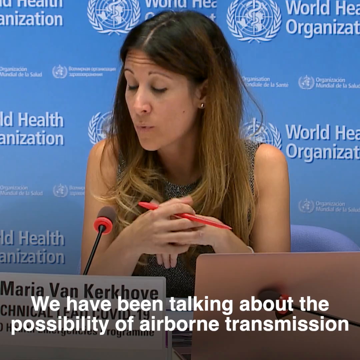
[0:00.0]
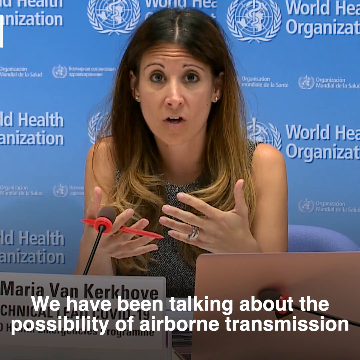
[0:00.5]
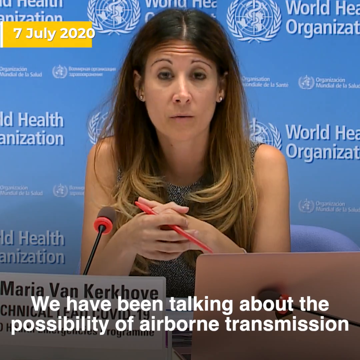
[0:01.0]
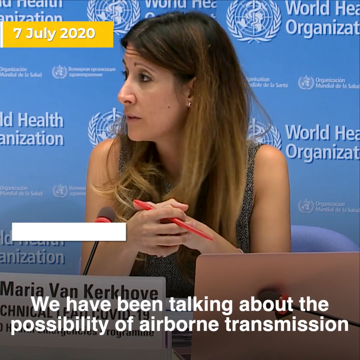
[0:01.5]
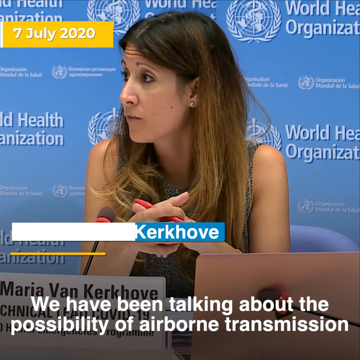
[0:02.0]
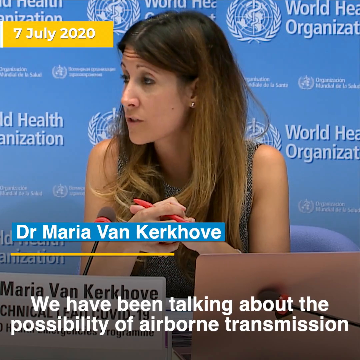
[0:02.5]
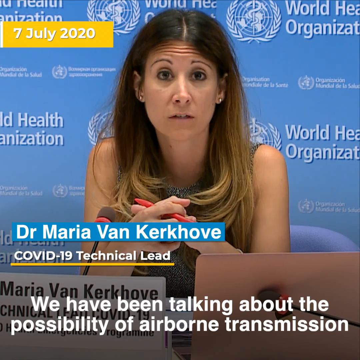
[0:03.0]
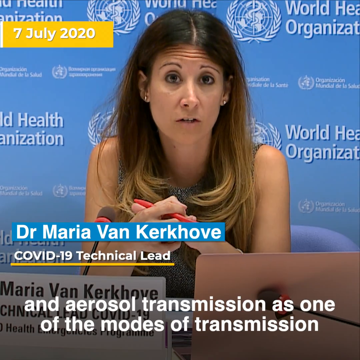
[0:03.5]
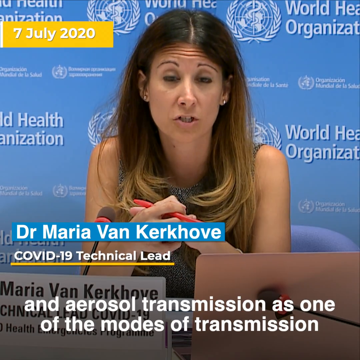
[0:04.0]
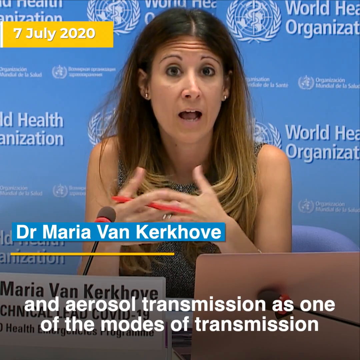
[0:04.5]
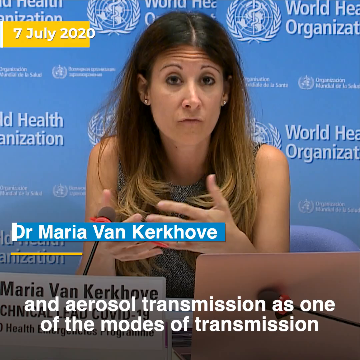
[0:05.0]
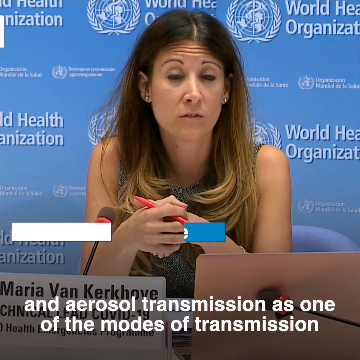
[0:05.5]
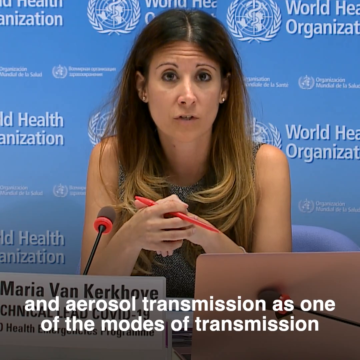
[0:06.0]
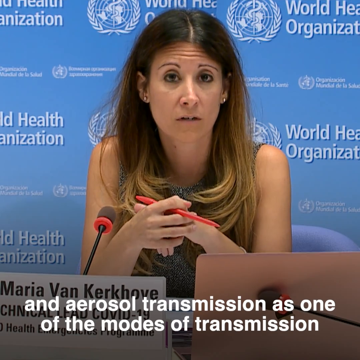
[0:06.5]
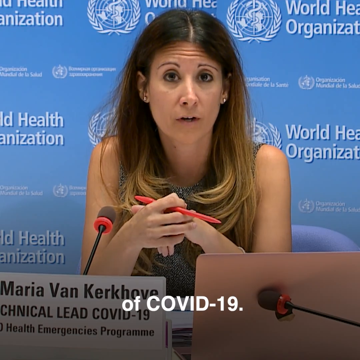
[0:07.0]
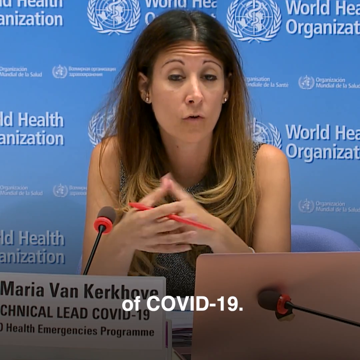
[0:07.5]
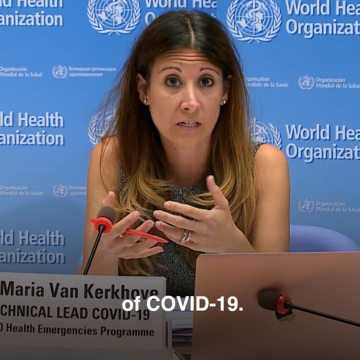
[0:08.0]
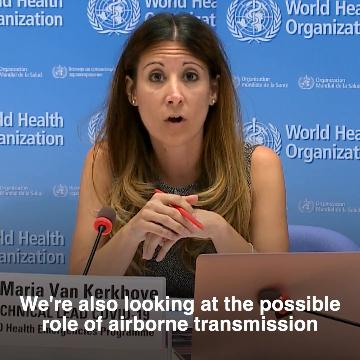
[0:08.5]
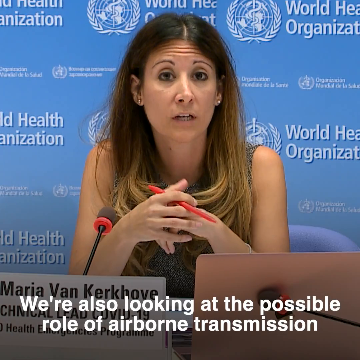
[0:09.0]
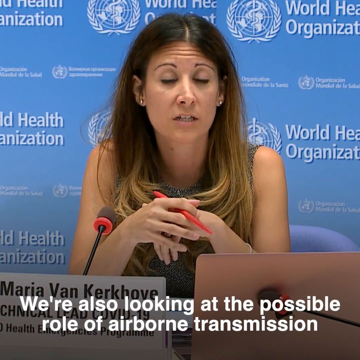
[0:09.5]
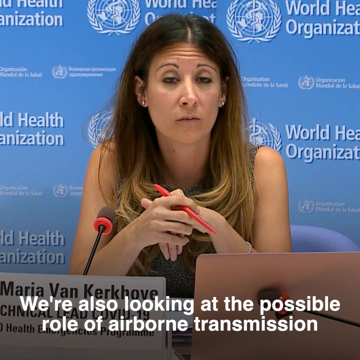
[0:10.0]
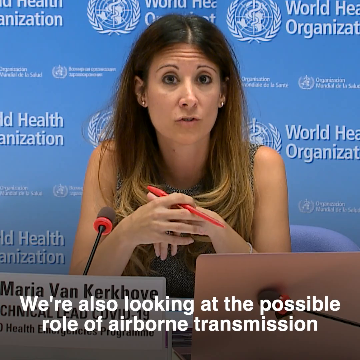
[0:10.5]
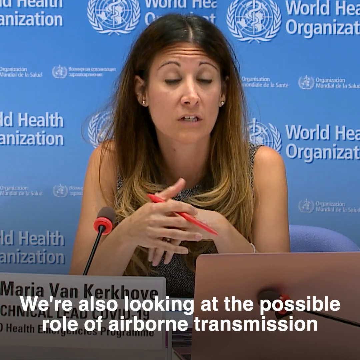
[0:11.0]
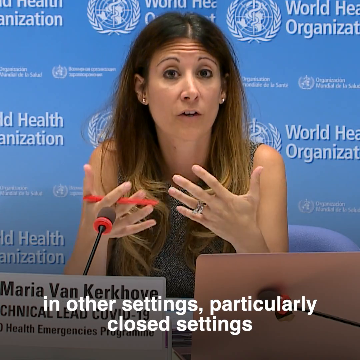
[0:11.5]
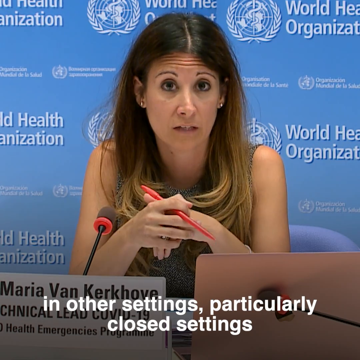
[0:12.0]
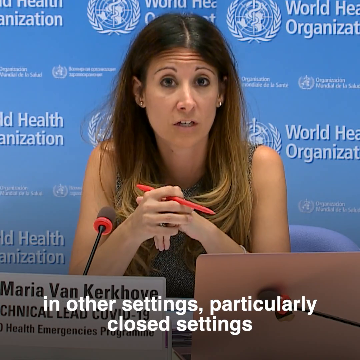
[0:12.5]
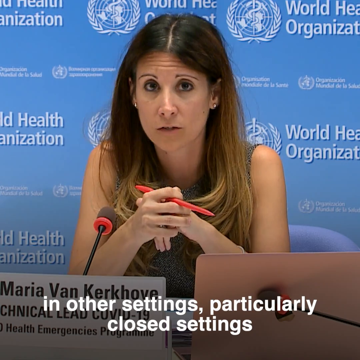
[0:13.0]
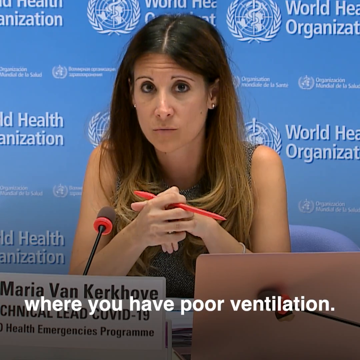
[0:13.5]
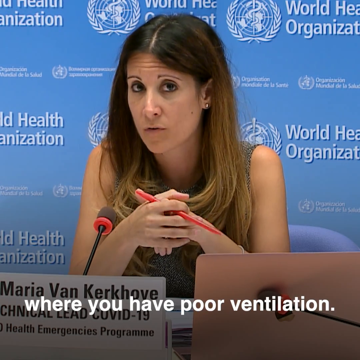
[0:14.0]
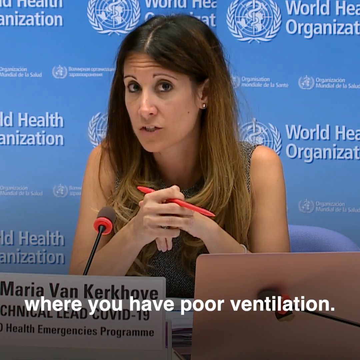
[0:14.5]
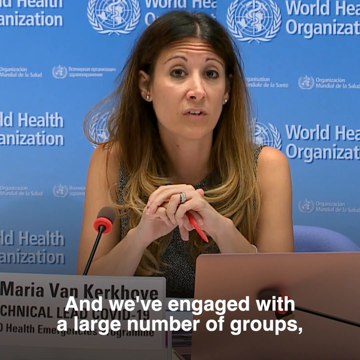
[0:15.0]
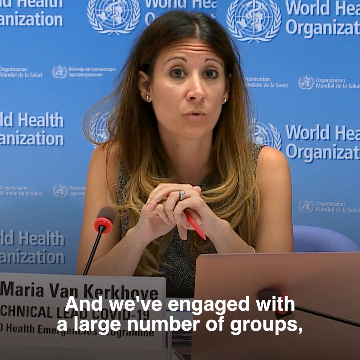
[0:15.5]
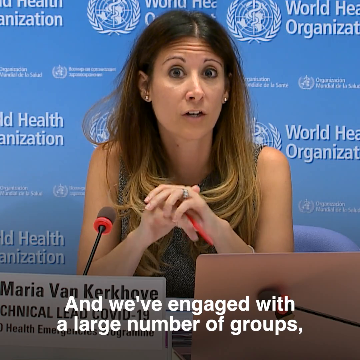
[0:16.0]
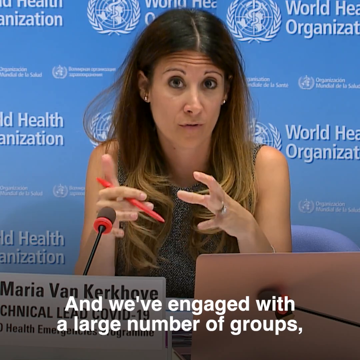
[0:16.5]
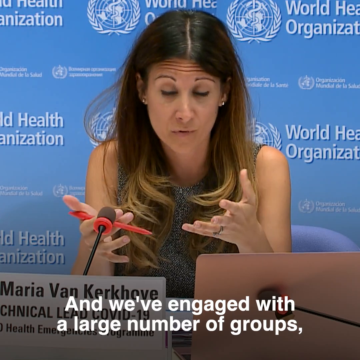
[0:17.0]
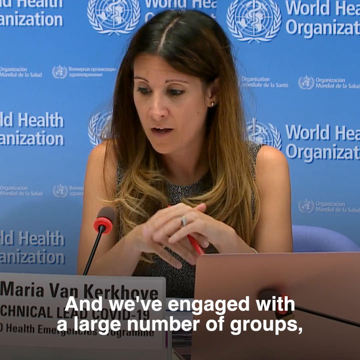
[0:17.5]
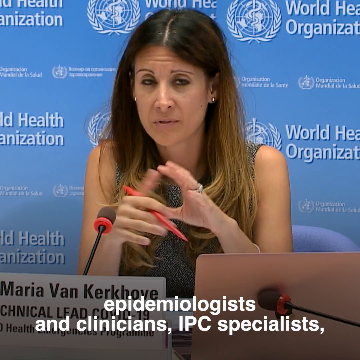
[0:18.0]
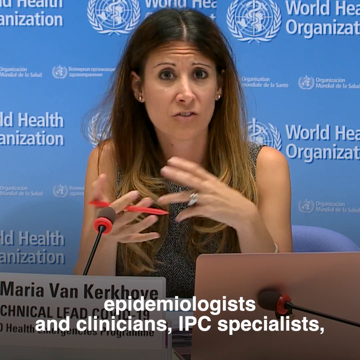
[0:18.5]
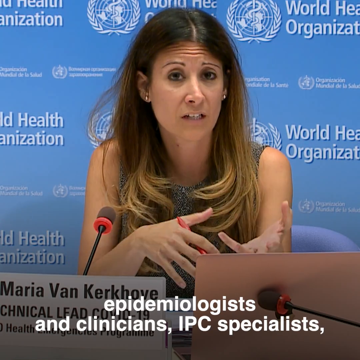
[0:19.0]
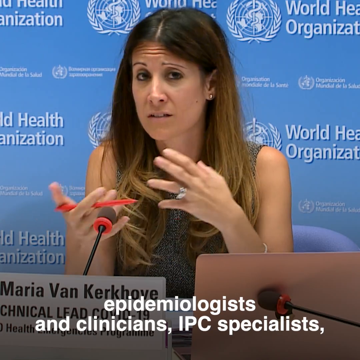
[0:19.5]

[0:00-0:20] A woman, who appears to be speaking, is sitting down with an open tablet or laptop in front of her. Behind her is a blue backdrop with white lettering that says "World Health Organization." White text on the screen reads "we have been talking about the possibility of airborne transmission." The video is time stamped July 7th, 2020, and the speaker is identified as Dr. Maria von Kirchhoff, apparently a COVID-19 technical lead. As she speaks, her hands are clasped at various intervals and she makes gestures. She holds a red pen in her right hand, and various text scrolls along the bottom of the screen.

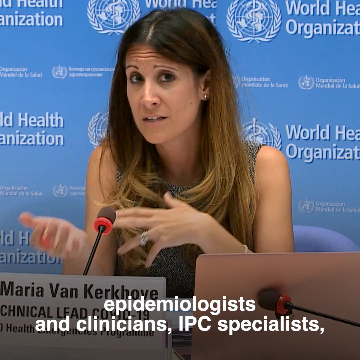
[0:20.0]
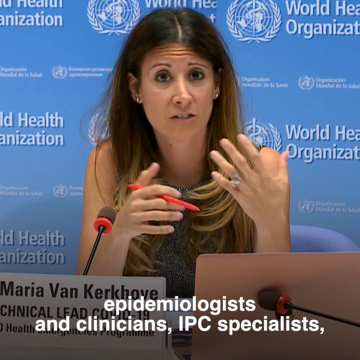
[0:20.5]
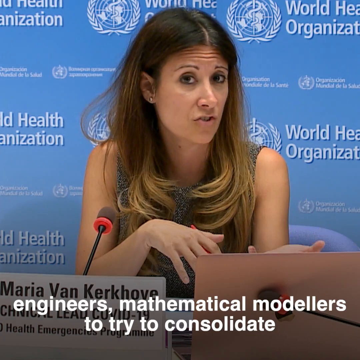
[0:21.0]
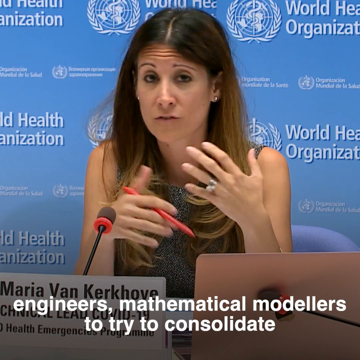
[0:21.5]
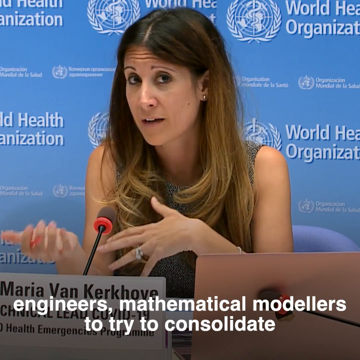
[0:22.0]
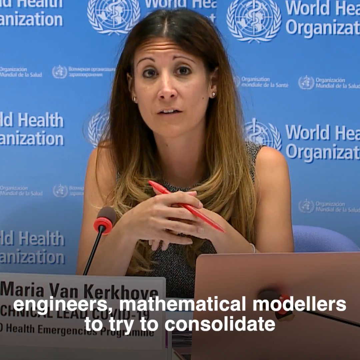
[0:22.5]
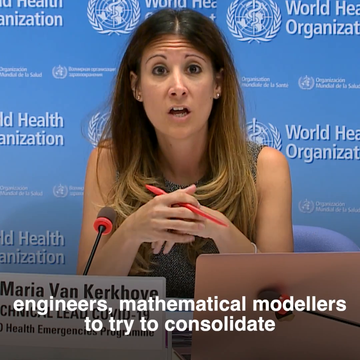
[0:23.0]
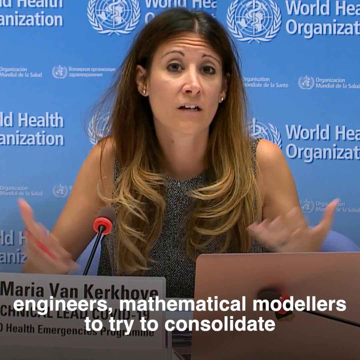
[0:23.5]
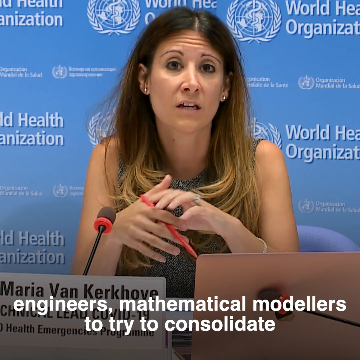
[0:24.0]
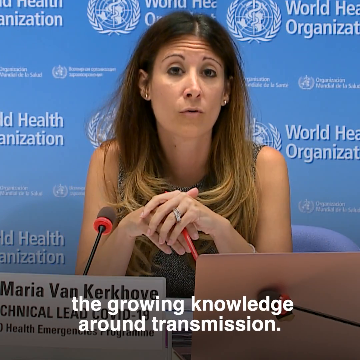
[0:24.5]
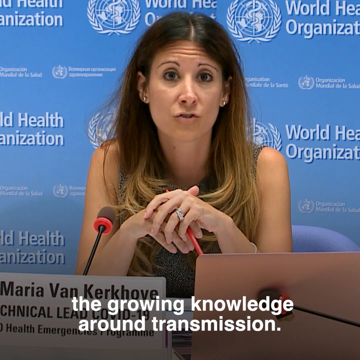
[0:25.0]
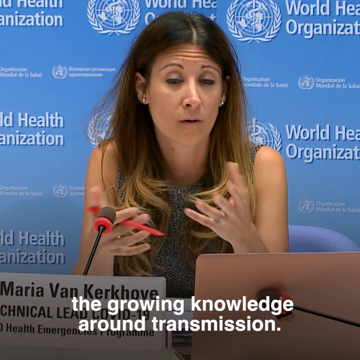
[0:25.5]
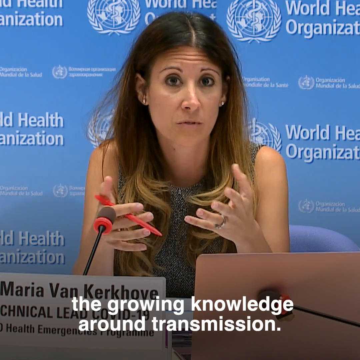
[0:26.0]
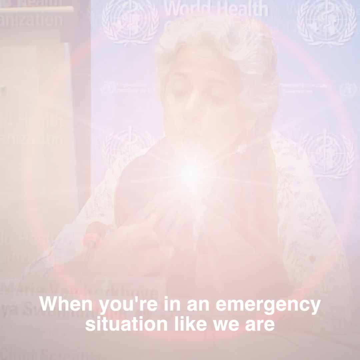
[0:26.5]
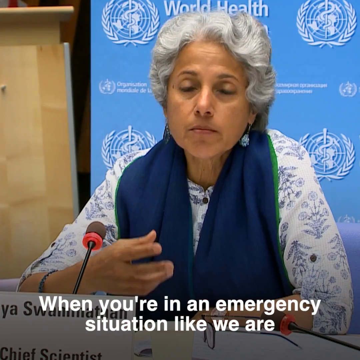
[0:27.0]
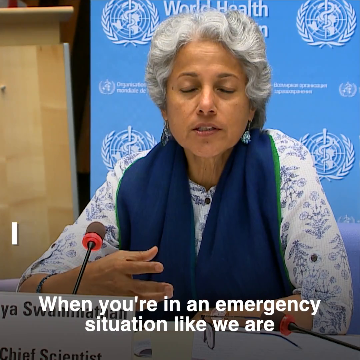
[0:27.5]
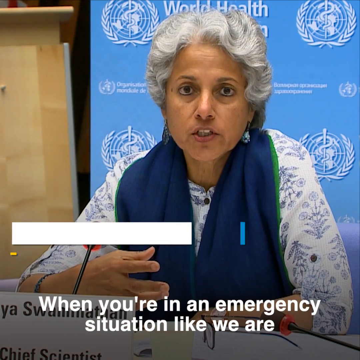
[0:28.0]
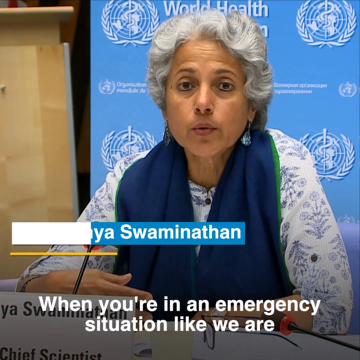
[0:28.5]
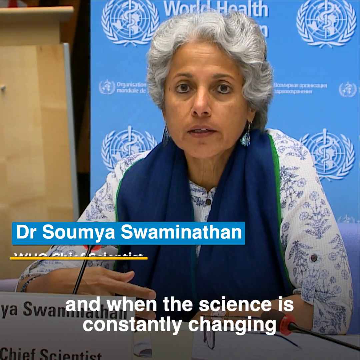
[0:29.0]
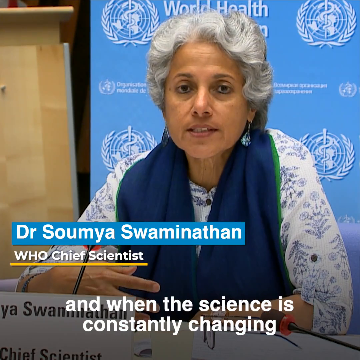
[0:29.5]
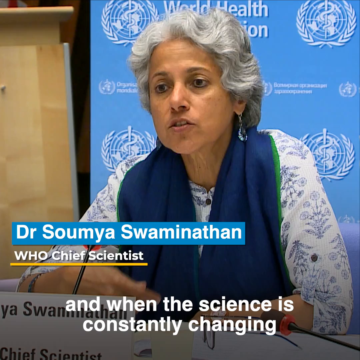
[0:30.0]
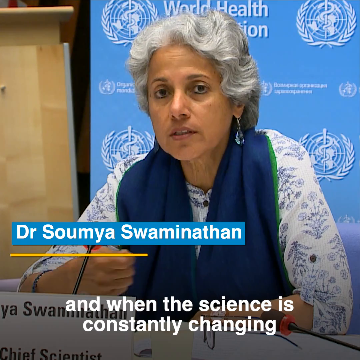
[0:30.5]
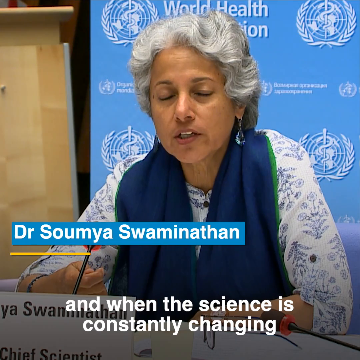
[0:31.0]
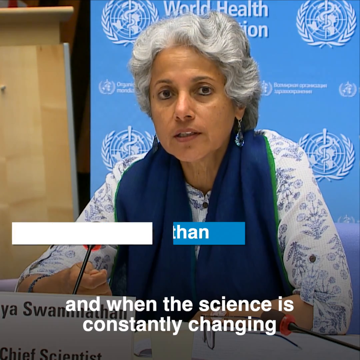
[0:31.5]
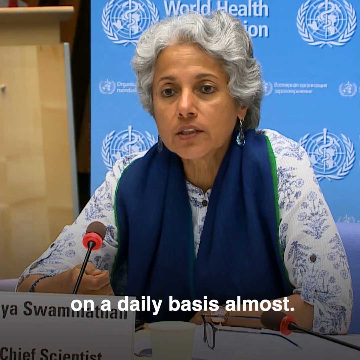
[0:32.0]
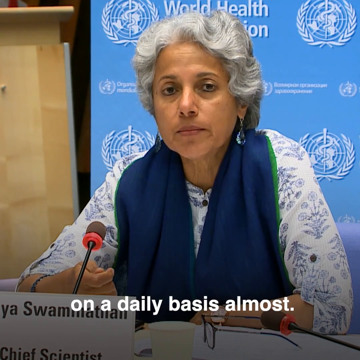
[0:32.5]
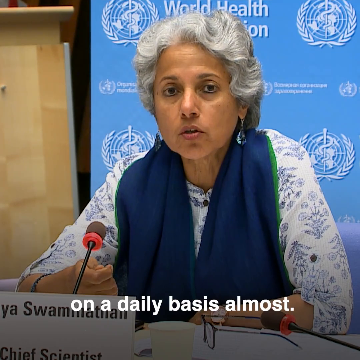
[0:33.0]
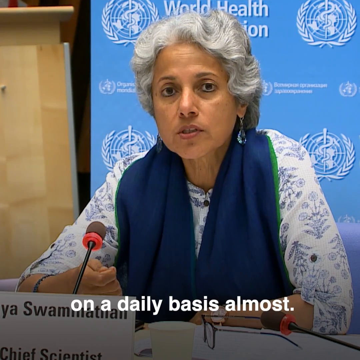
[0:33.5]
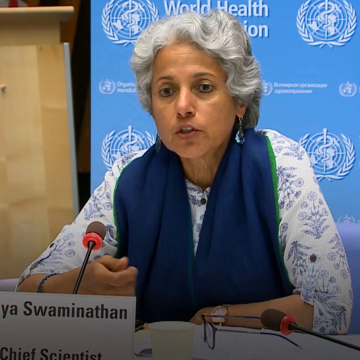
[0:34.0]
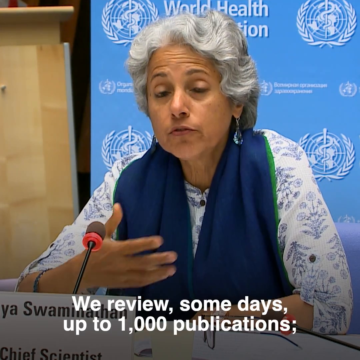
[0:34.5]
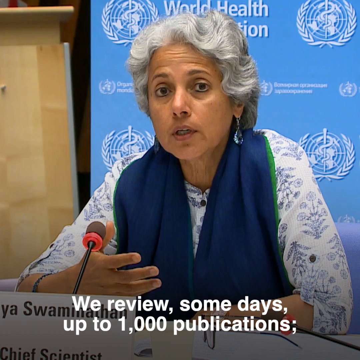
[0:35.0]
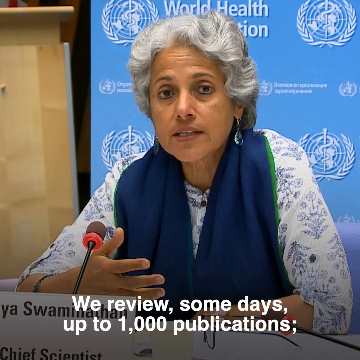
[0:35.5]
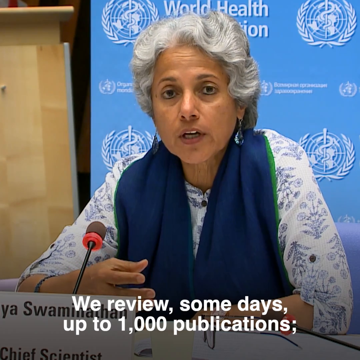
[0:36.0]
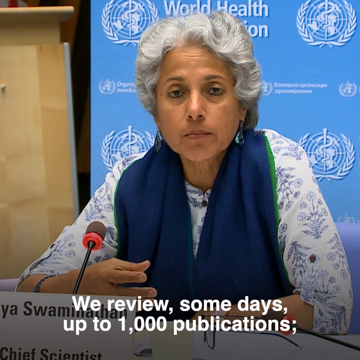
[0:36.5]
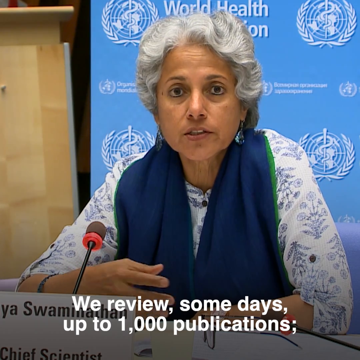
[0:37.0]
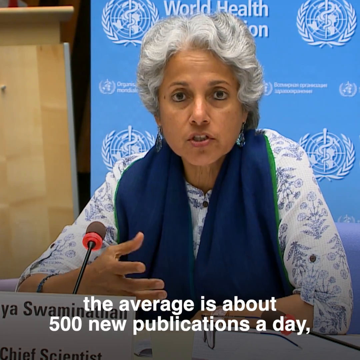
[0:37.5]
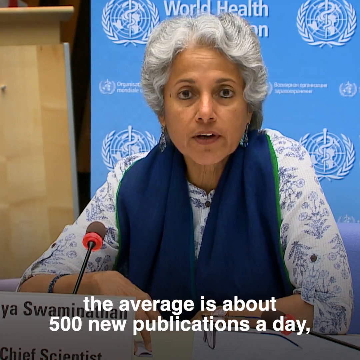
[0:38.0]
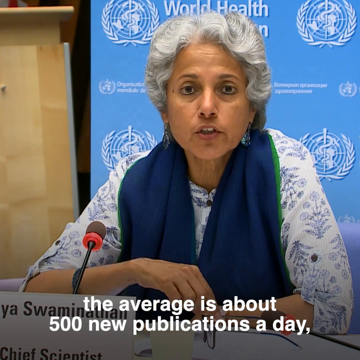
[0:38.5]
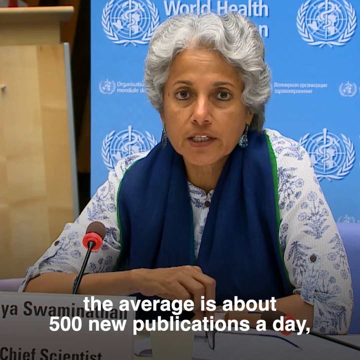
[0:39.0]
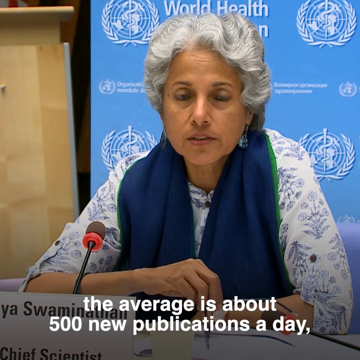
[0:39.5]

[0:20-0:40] Maria Van Kerkhove, a COVID-19 technical lead, is on the screen speaking. She wears a sleeveless black dress with white specks on it, a bracelet on her left hand, a wedding ring or wedding band on her left ring finger, and small earrings. She has very thin eyebrows, is slender, and has a mole on her left cheek. Her hair appears to be brunette with blonde highlights kind of going towards the ends; it goes down to about the middle of her arms and is partially draped over her chest. She has a very concerned demeanor as she speaks, using various hand gestures, gesturing left and right and with both hands. Then someone else appears on the screen: Dr. Soumya Swaminathan, a World Health Organization Chief Scientist. She wears a white sleeved dress with blue floral patterns, the sleeves coming down to about her elbows, and a blue scarf outlined with a green accent toward the outer edge. She is gray-haired and wears blue earrings. She, too, is gesturing, mostly with her right hand, and makes emphatic gestures.